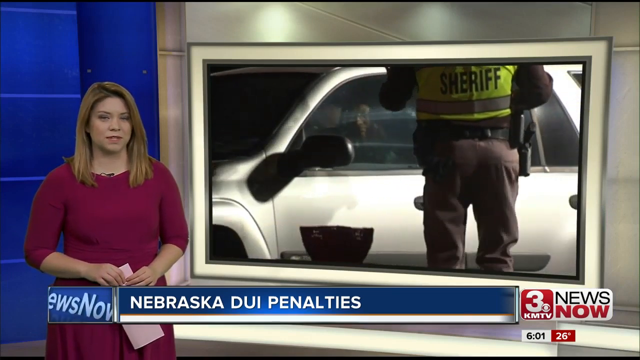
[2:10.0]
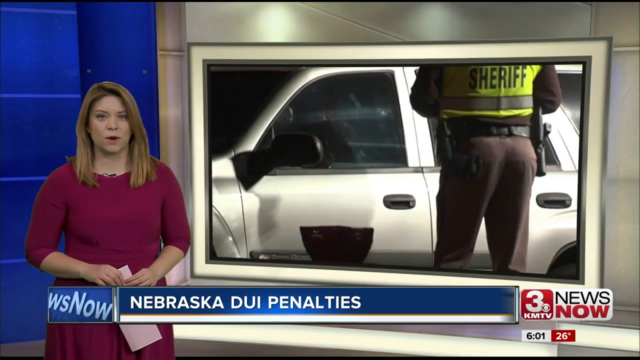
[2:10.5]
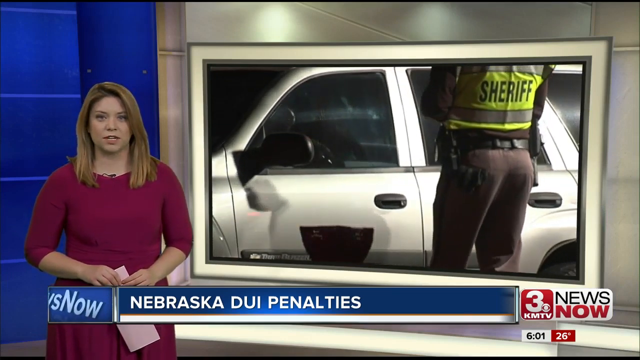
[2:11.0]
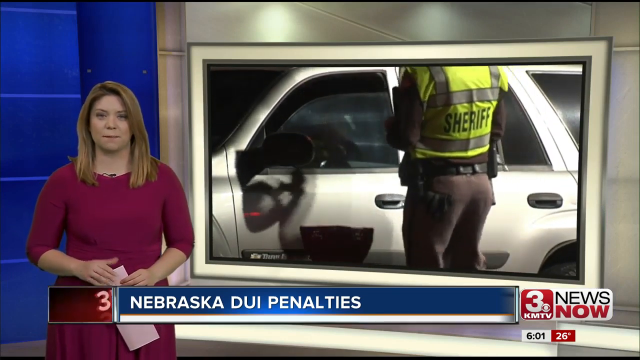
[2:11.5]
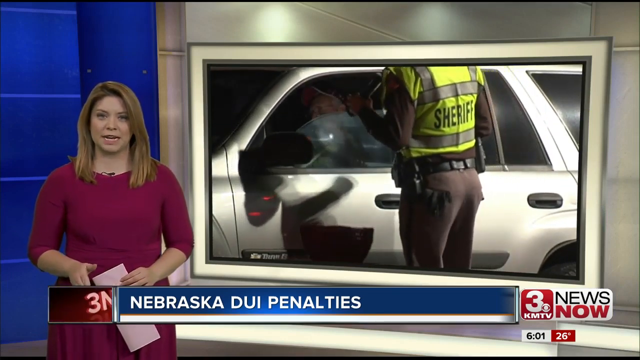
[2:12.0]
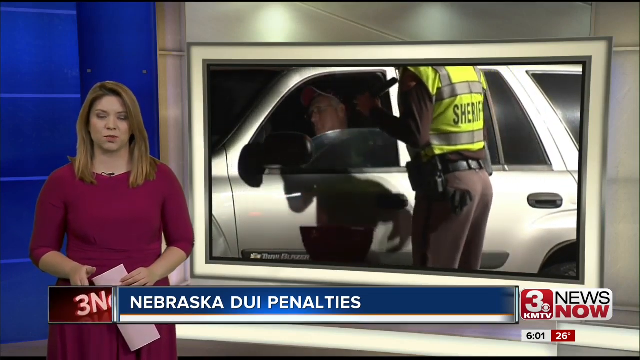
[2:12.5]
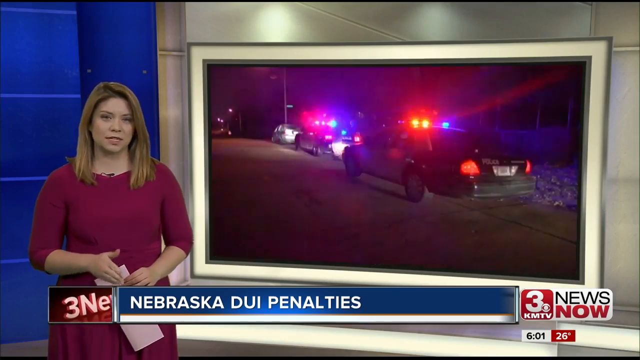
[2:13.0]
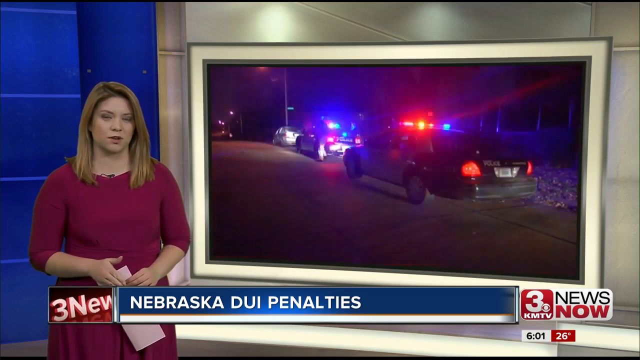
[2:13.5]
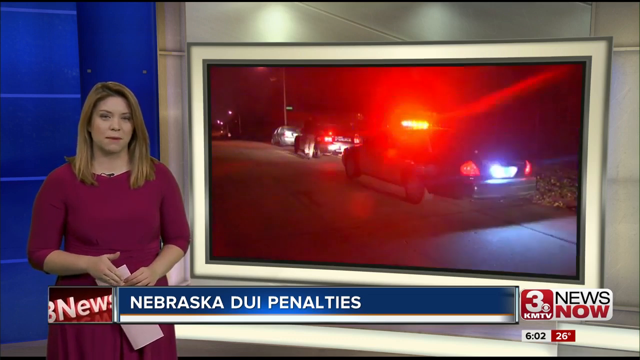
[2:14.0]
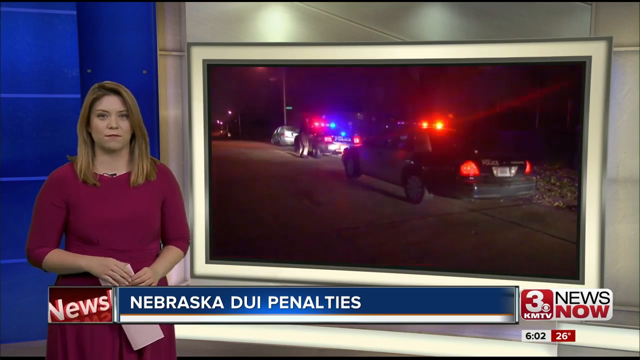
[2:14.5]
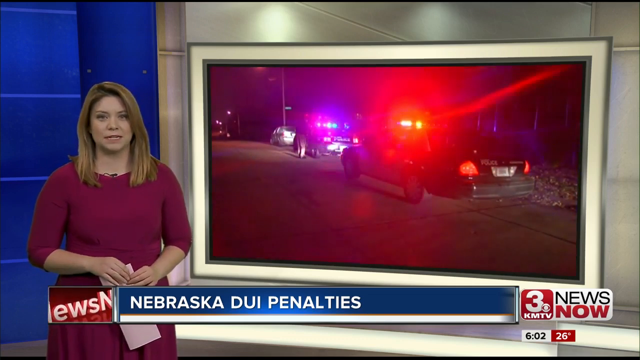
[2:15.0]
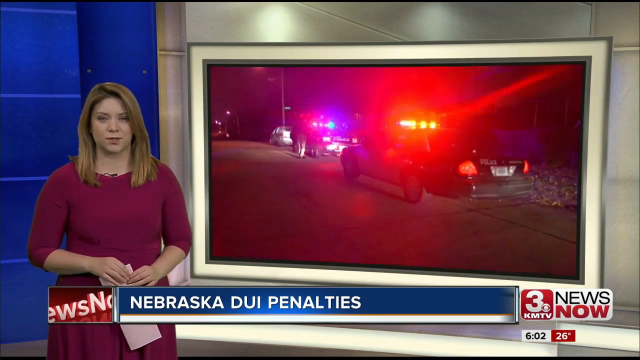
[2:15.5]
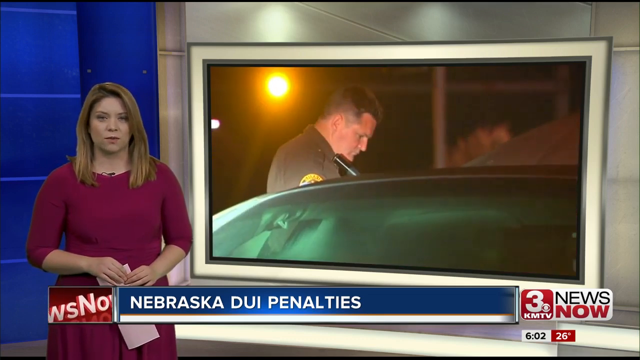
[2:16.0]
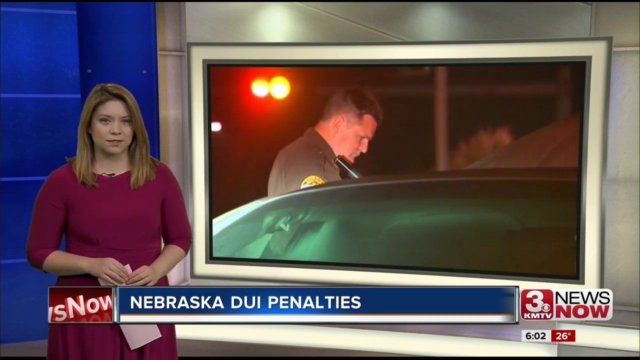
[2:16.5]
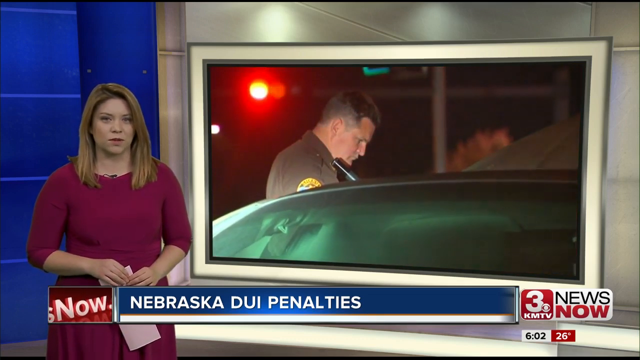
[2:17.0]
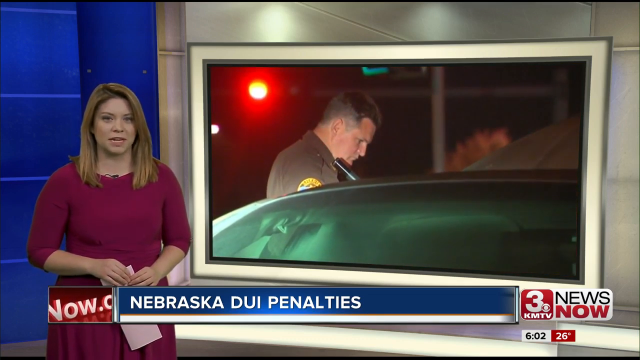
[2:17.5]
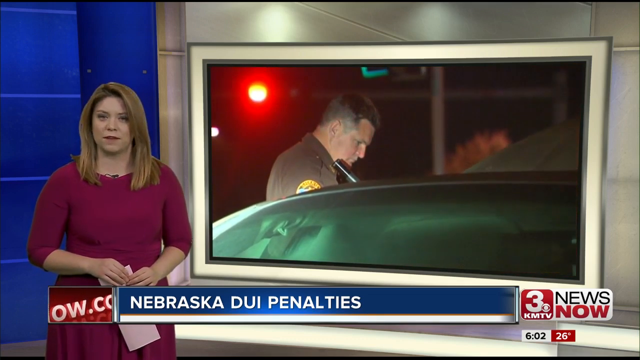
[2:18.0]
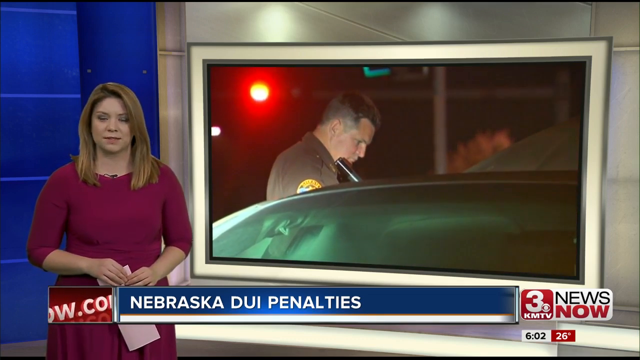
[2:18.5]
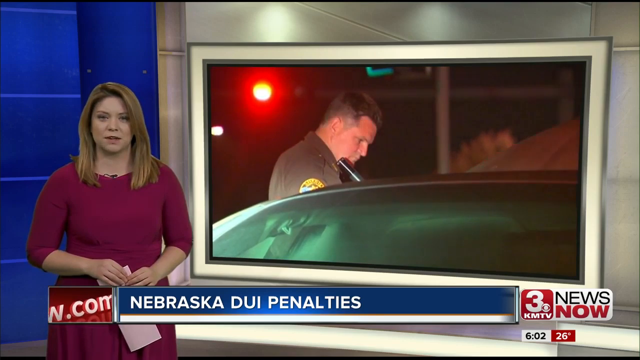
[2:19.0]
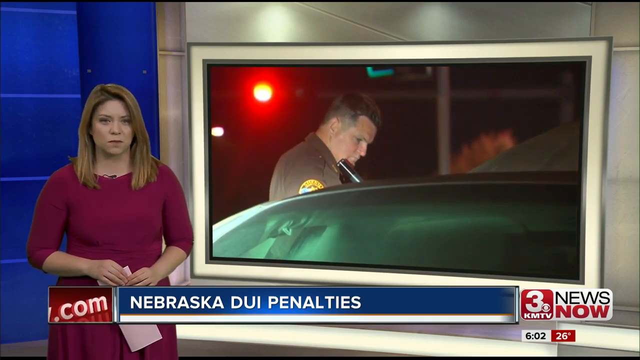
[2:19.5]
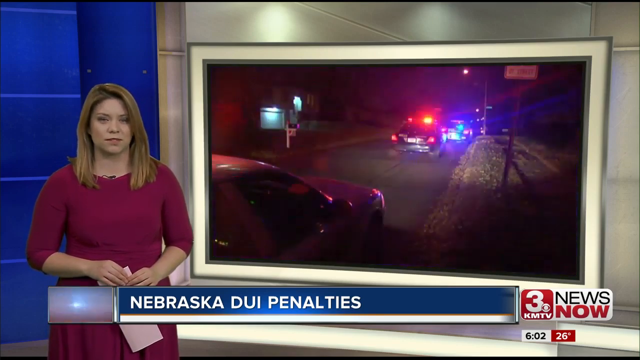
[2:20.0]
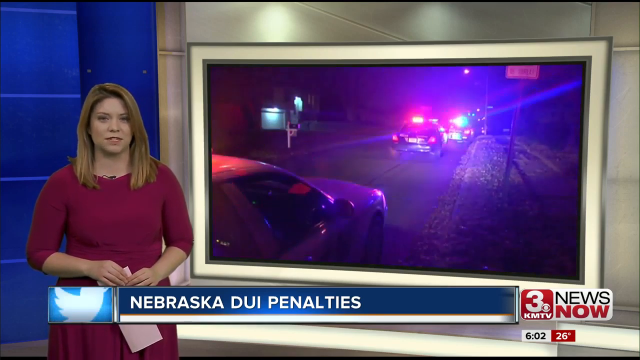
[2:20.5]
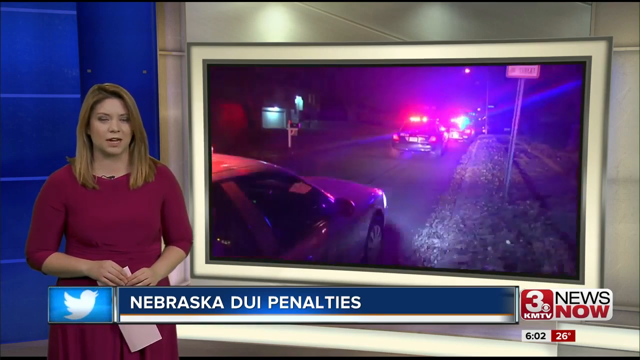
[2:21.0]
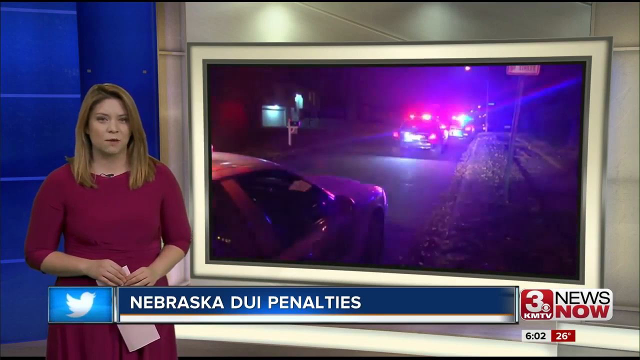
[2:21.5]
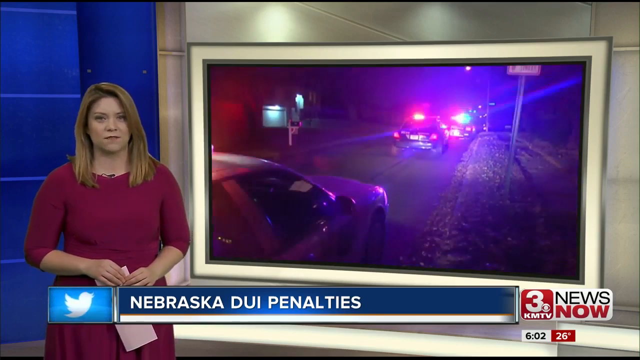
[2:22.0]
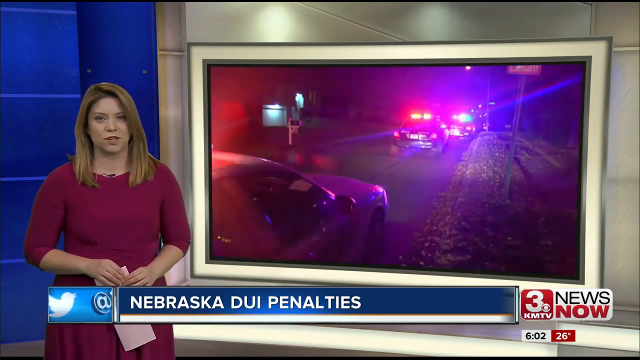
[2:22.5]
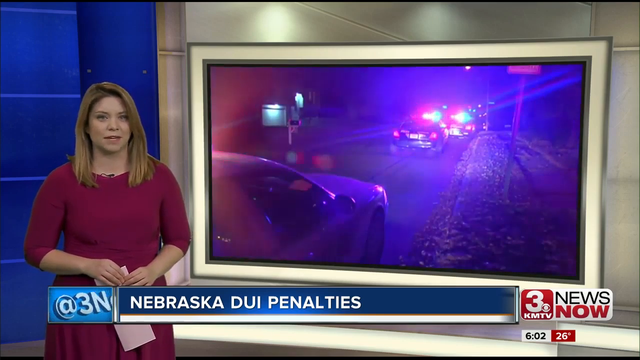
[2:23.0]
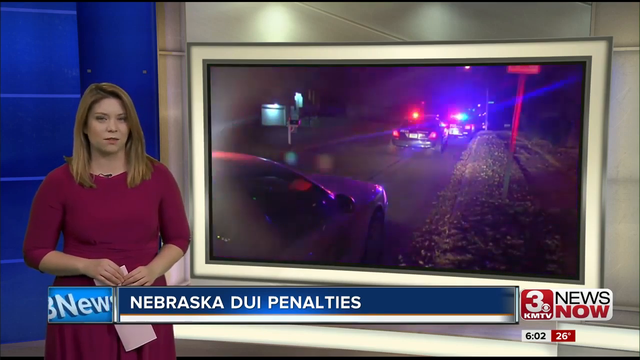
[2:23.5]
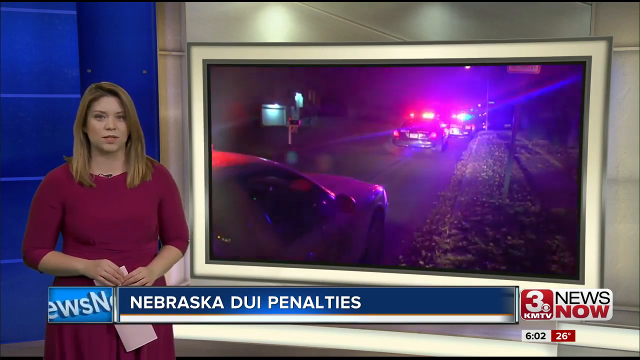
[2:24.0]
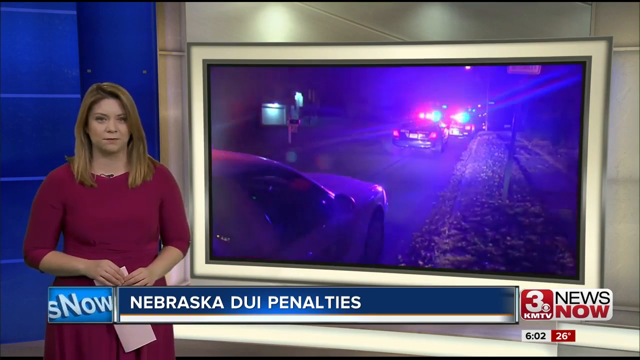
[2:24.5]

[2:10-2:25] In the studio, Megan Hahn presents, standing in front of the monitor. She makes a very small pointing gesture with her right hand and holds a piece of paper with both hands; it looks like a sheet of A4 either folded or torn in half vertically. She nods her head slightly. Once again the image of the policeman with a flashlight talking to a motorist is shown, and once again the police cars parked at night at a drink-driving check.